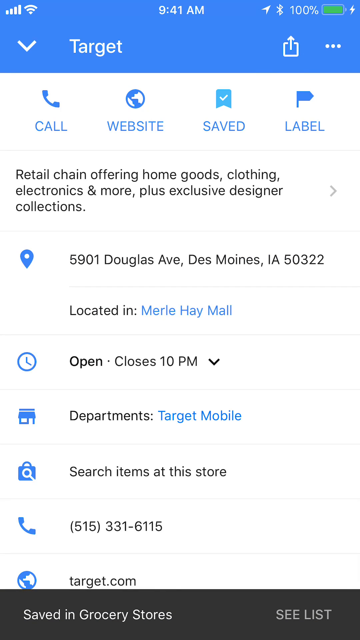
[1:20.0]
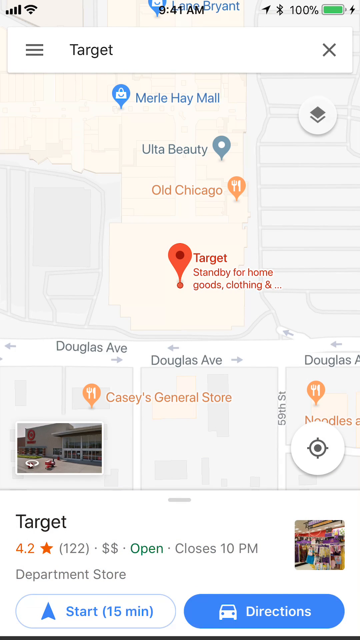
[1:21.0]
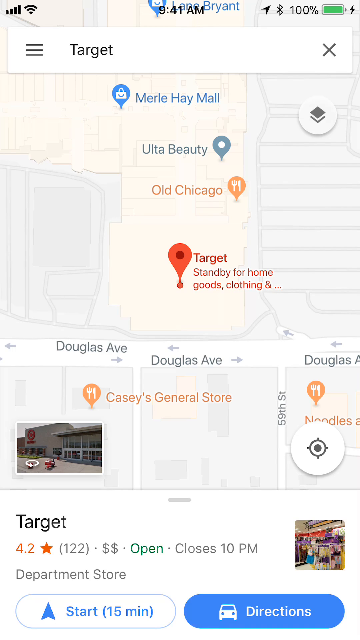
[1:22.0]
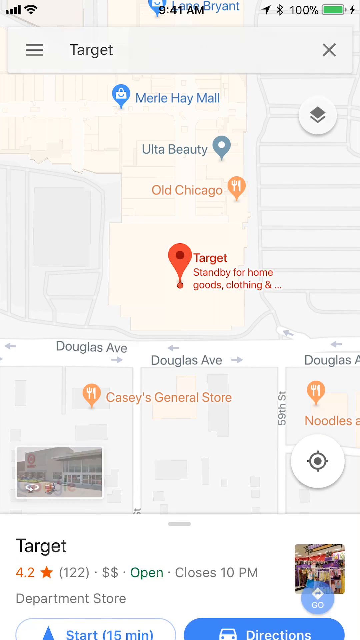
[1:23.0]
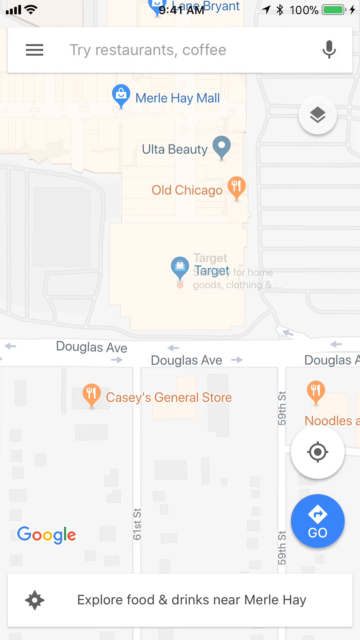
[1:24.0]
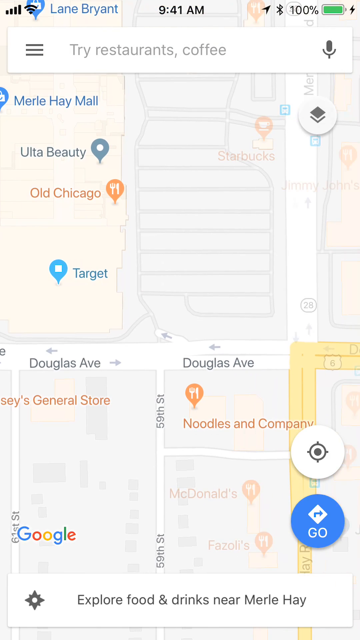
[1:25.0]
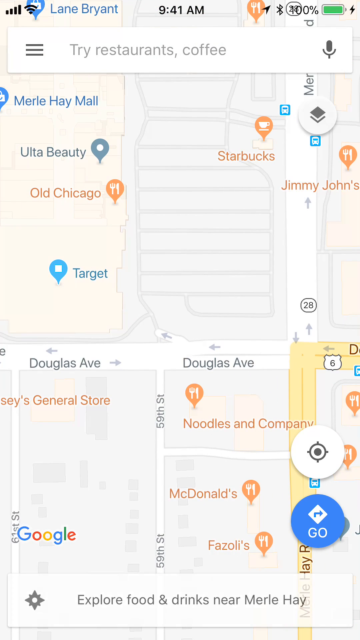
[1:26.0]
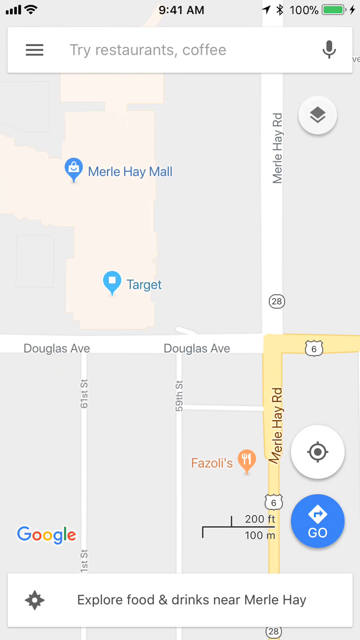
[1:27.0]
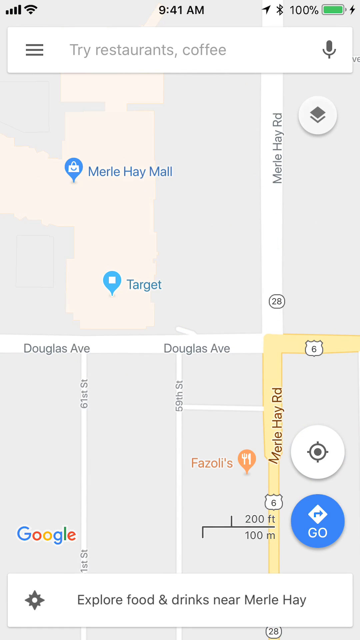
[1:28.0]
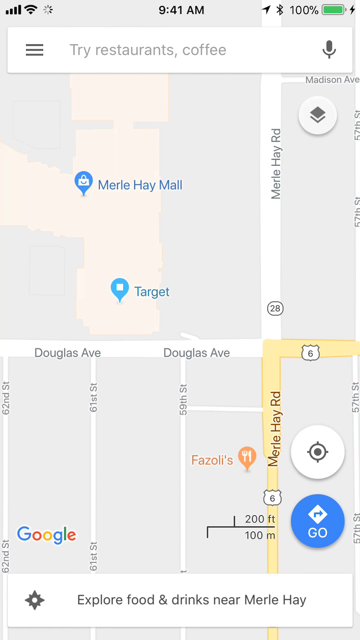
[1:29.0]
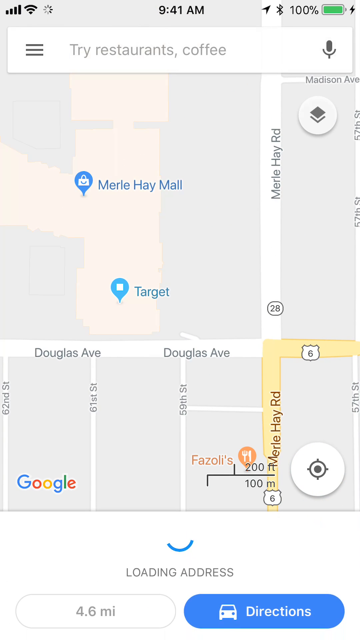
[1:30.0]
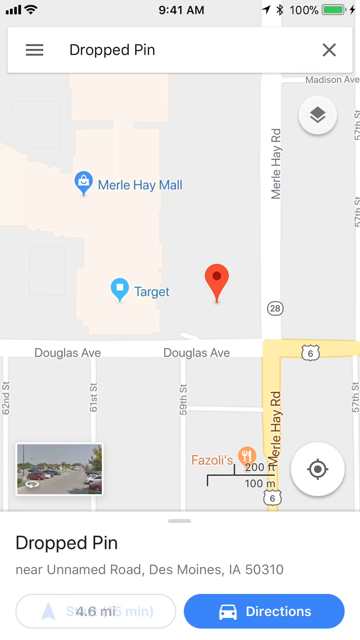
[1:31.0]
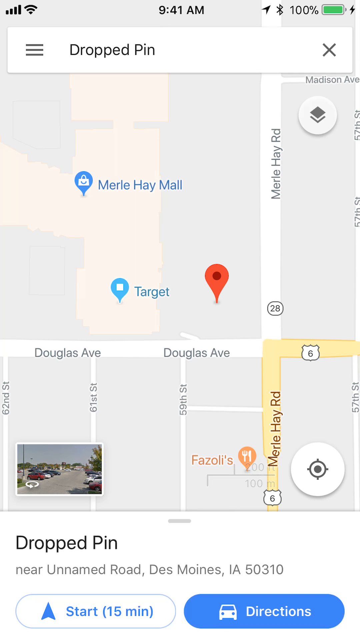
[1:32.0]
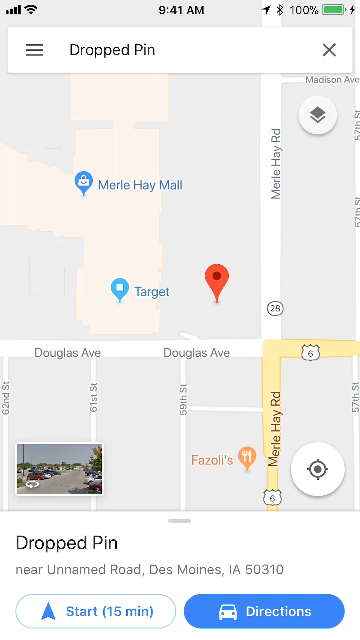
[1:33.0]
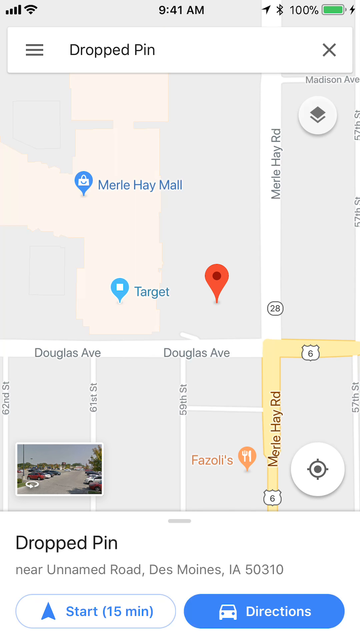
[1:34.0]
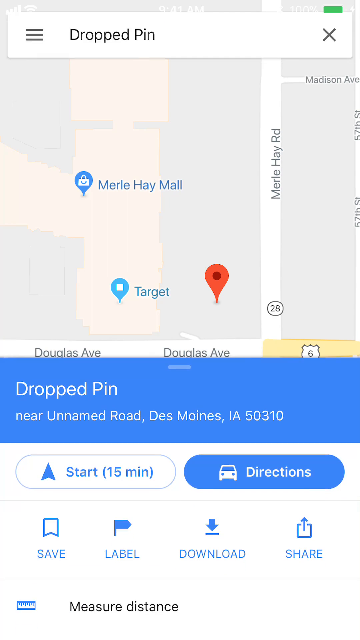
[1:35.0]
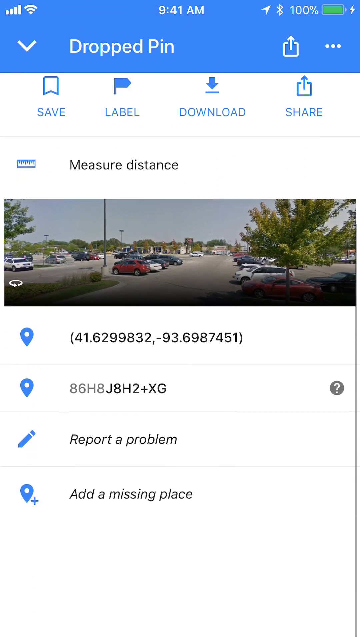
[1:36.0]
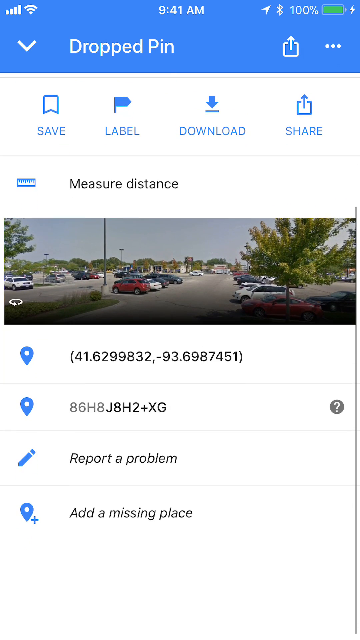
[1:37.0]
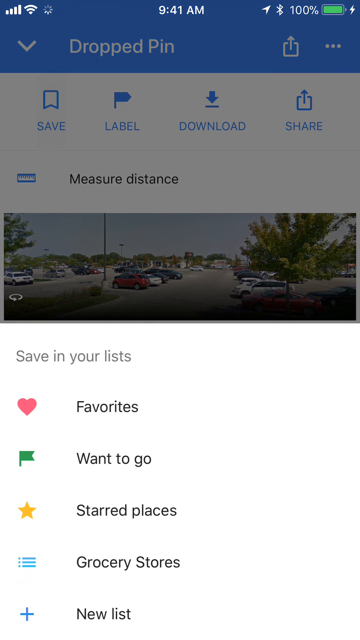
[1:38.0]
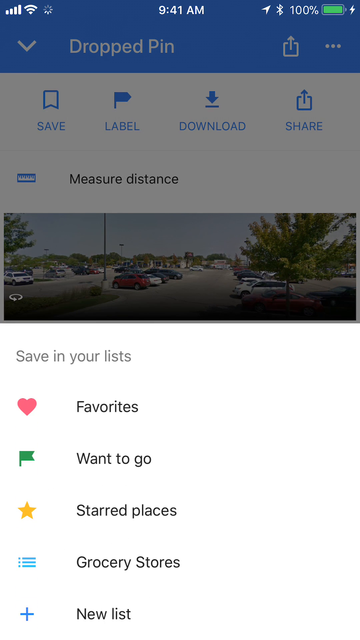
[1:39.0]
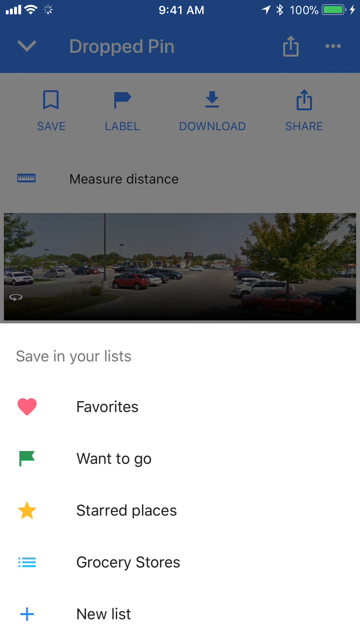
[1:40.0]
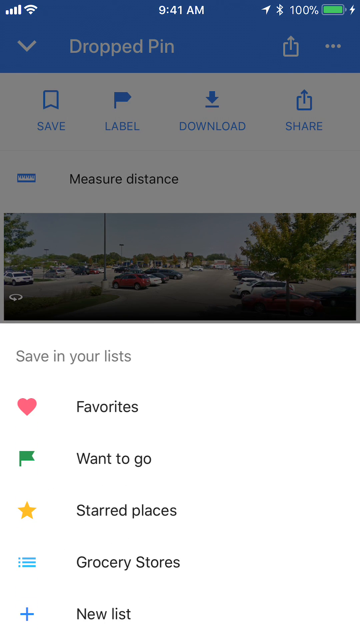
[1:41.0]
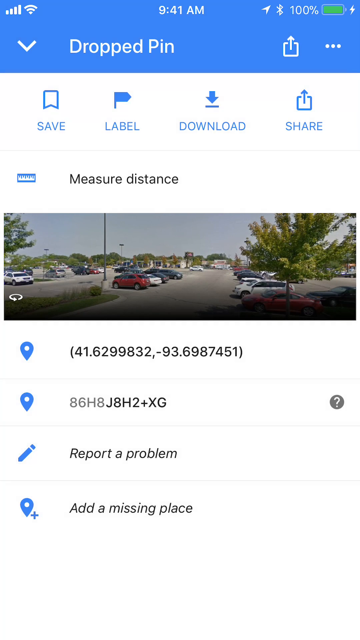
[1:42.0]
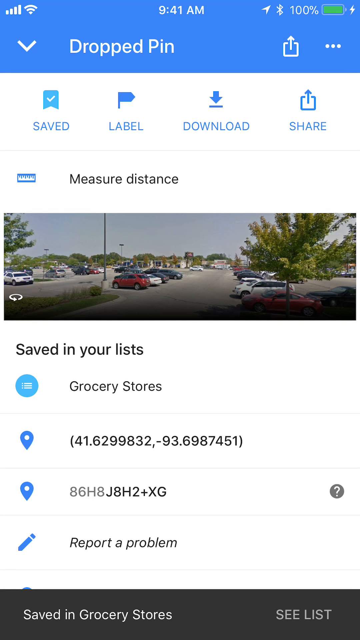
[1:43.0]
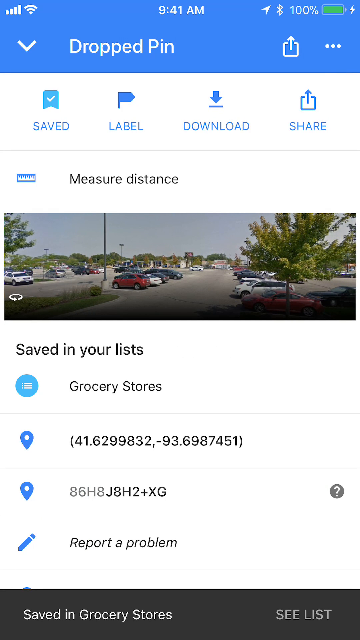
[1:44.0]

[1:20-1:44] The iPhone user closes the Target info card, and it slides down to the bottom of the screen, revealing the original overhead Google Maps view. The pin is located above the Target store, and the nearest street is Douglas Avenue. The red pin is removed, and the user moves the map to the right, then zooms out. The user adds a new pin, and a red pin icon appears near the Target store, close to the intersection of Douglas Avenue and Morrow Hay Road. A small card loads at the bottom, titled "Dropped Pin", with a small photograph of the street view where the pin is located. The subtext reads "Near Unnamed Road, Des Moines, Iowa, 50310". The user expands the dropped pin and it becomes full screen, with two buttons at the top, one saying "start" and another saying "directions". A street view of the pin's location is also visible, along with several options, including saving the location to lists. The user saves the new pin's location to the newly created "grocery stores" list, then closes the tab, which slides down and reveals the map. The user reopens the dropped pin and saves the location in the grocery stores list again.